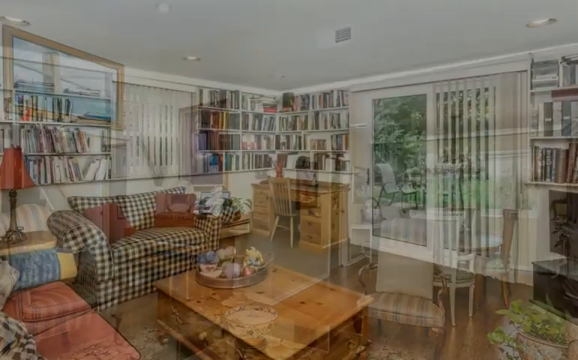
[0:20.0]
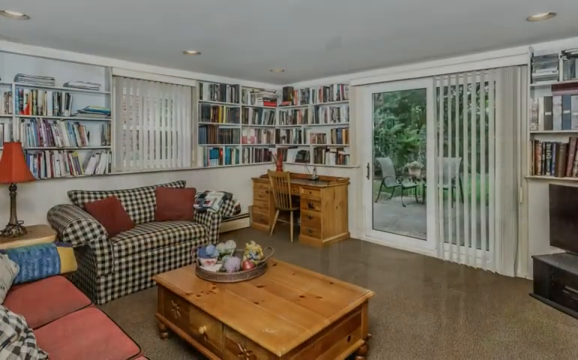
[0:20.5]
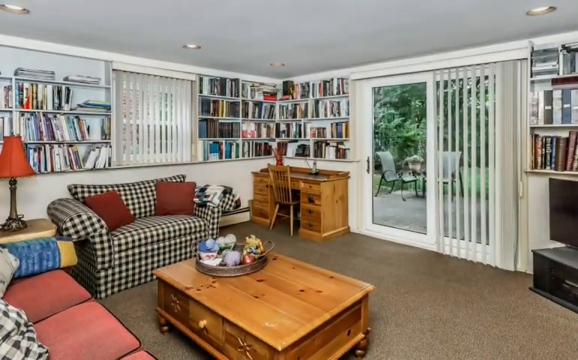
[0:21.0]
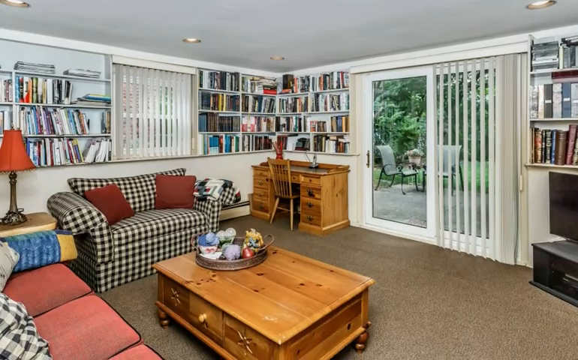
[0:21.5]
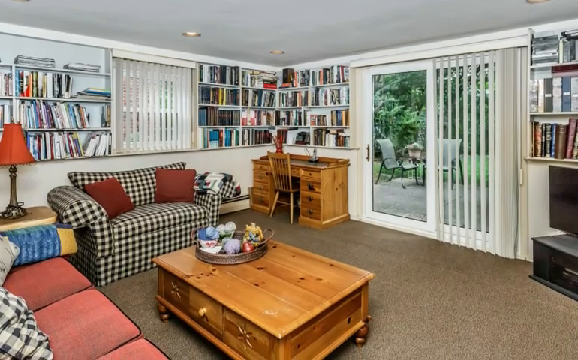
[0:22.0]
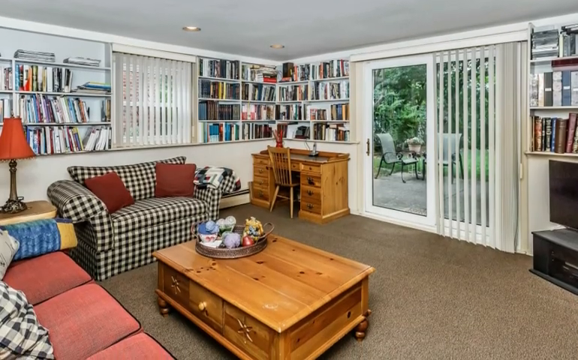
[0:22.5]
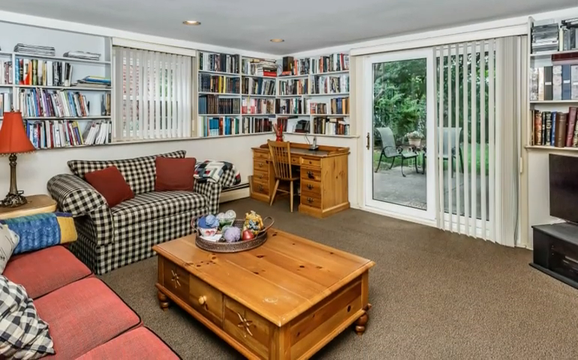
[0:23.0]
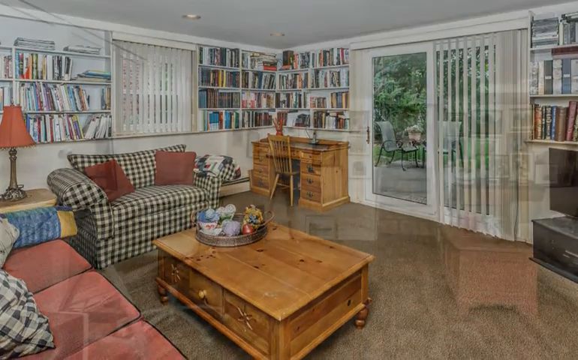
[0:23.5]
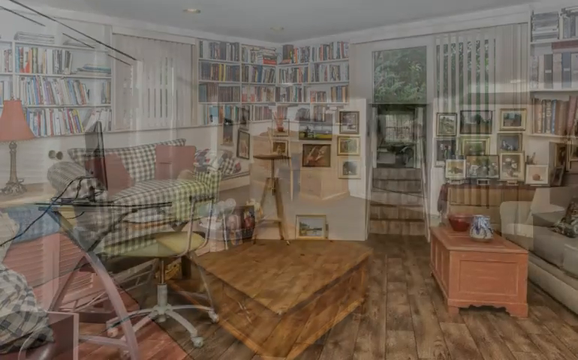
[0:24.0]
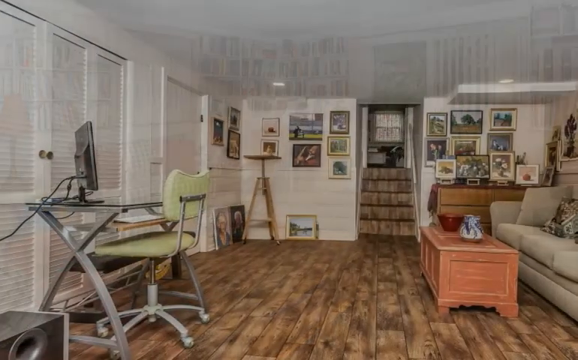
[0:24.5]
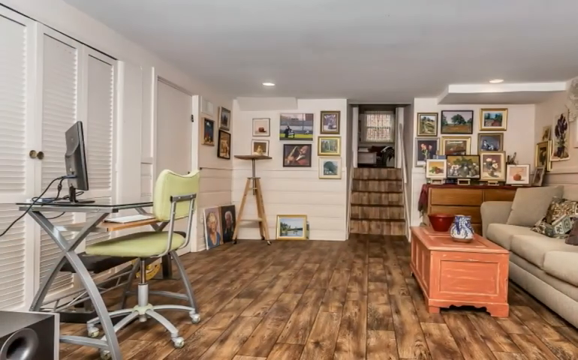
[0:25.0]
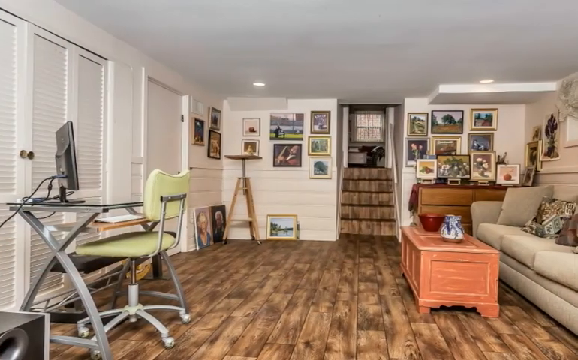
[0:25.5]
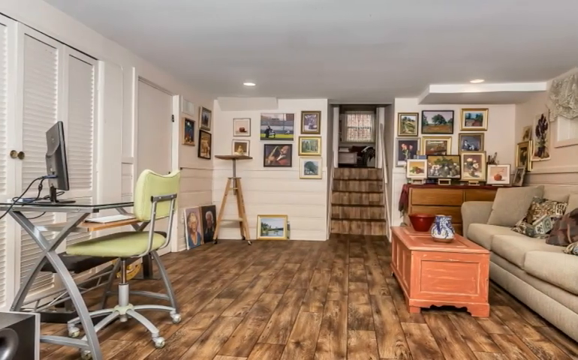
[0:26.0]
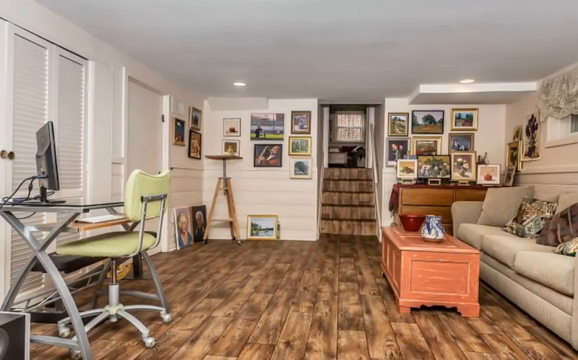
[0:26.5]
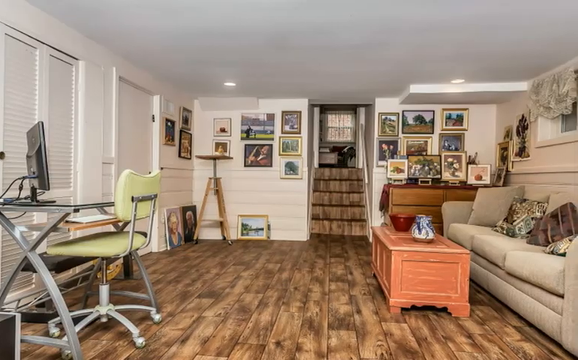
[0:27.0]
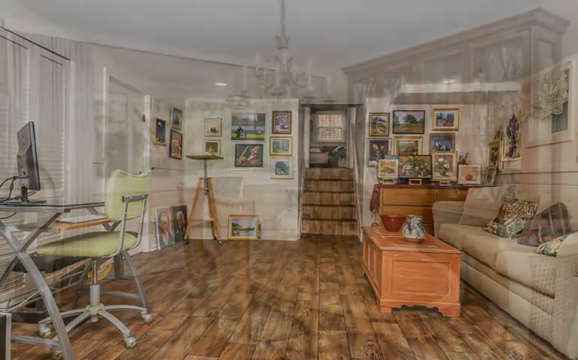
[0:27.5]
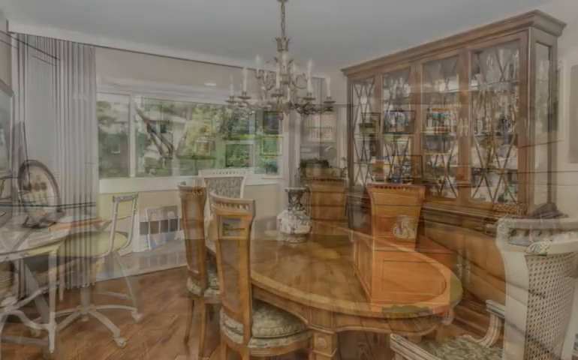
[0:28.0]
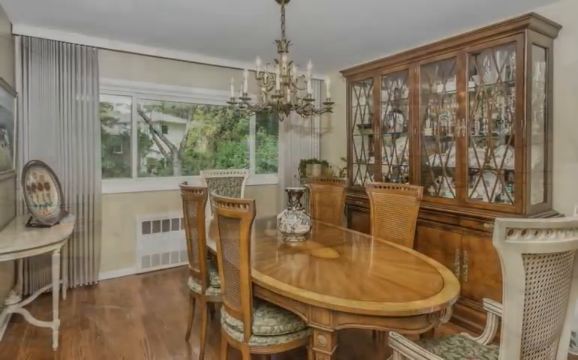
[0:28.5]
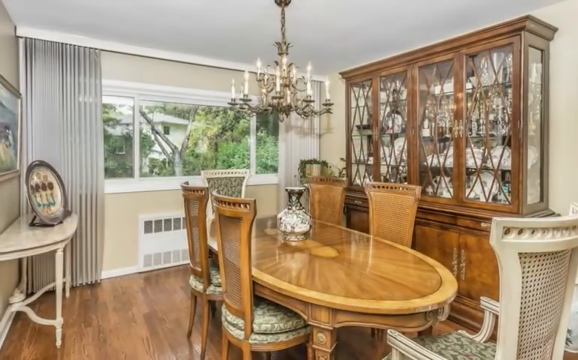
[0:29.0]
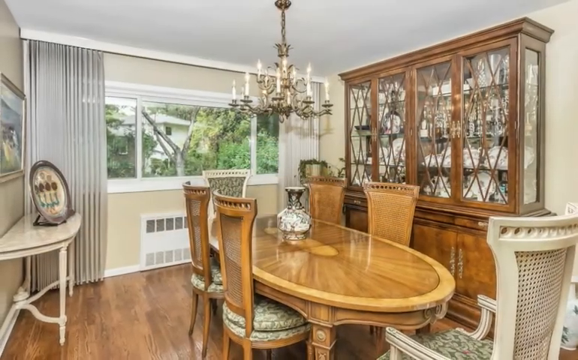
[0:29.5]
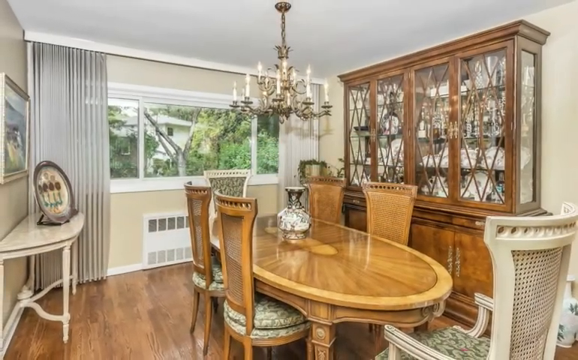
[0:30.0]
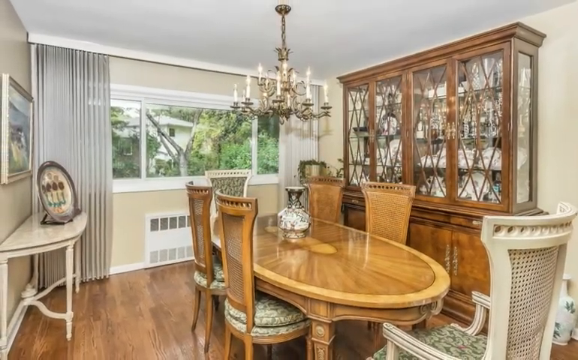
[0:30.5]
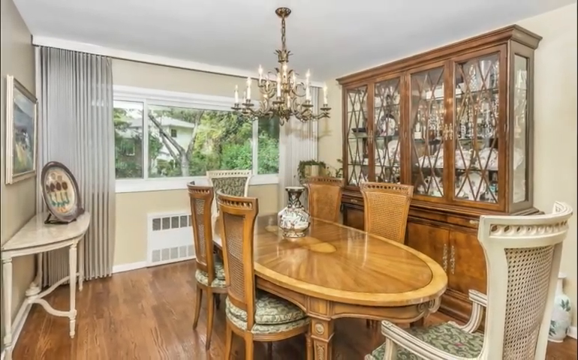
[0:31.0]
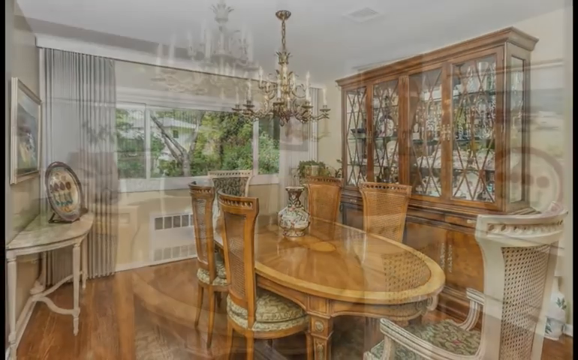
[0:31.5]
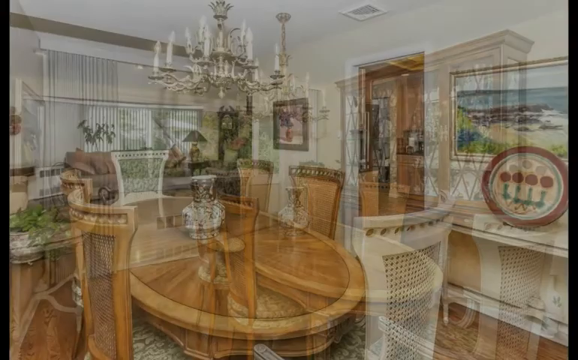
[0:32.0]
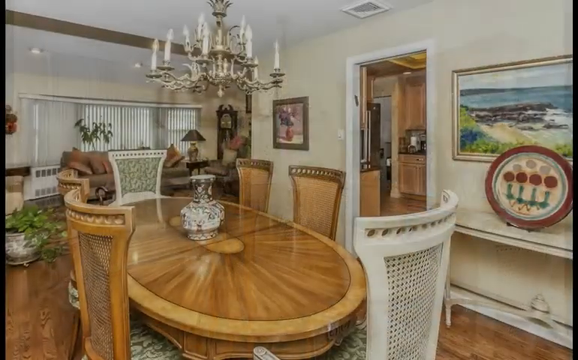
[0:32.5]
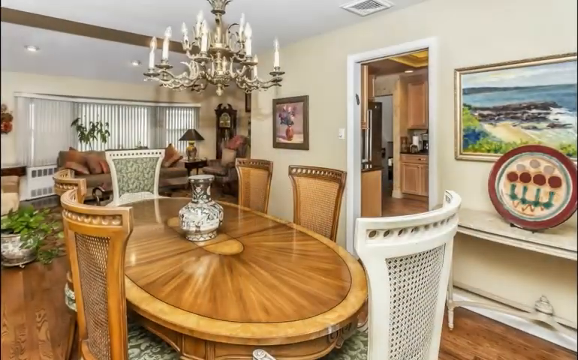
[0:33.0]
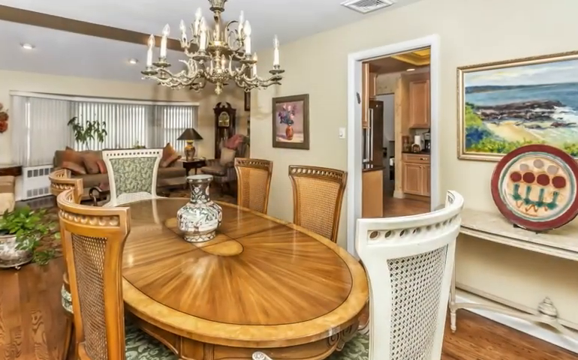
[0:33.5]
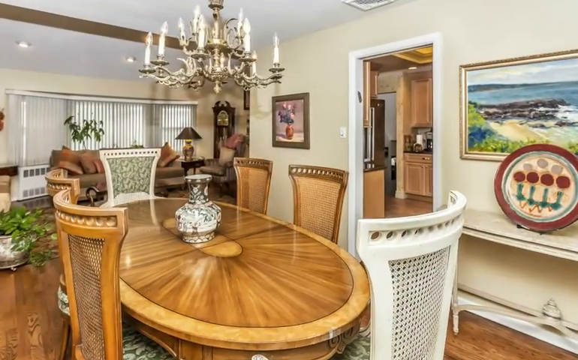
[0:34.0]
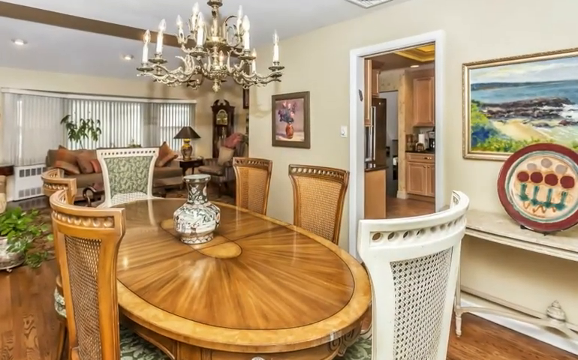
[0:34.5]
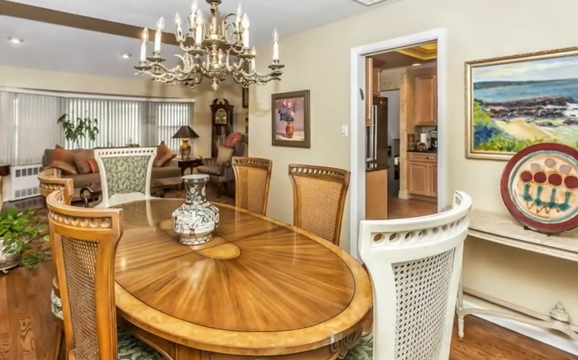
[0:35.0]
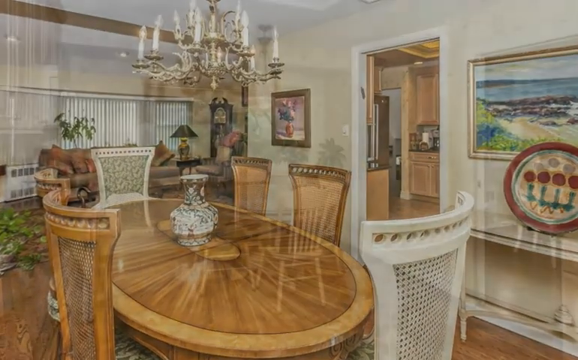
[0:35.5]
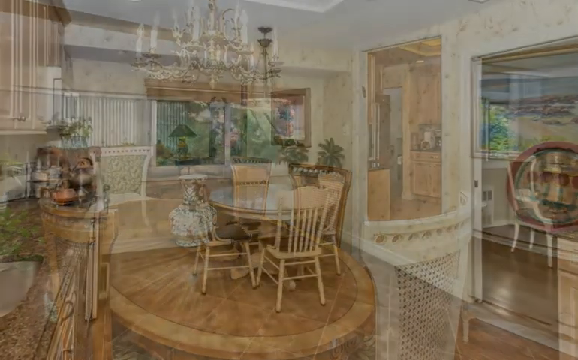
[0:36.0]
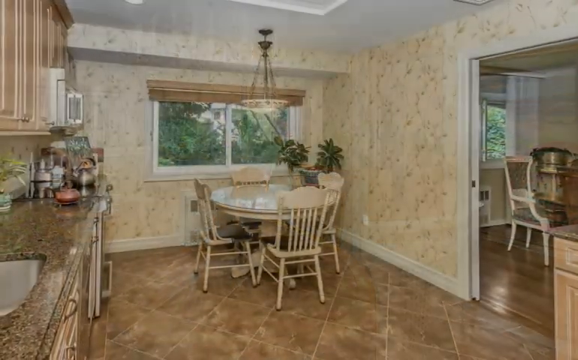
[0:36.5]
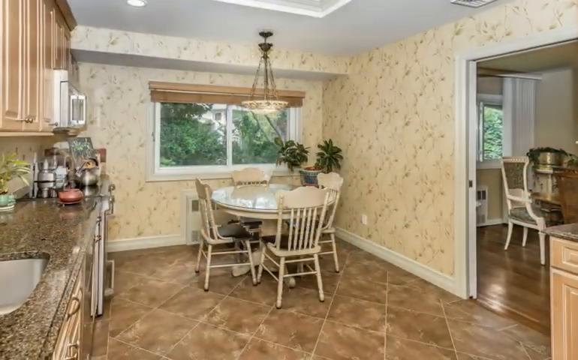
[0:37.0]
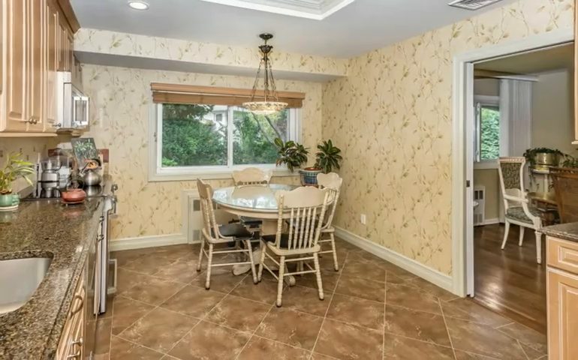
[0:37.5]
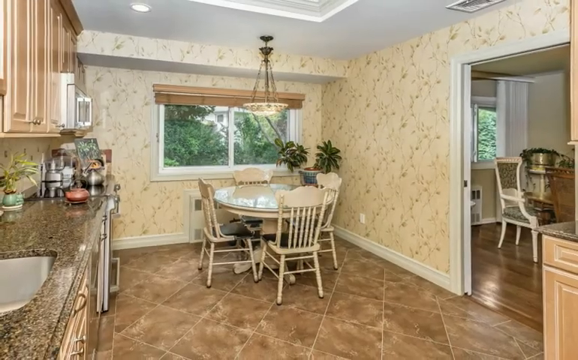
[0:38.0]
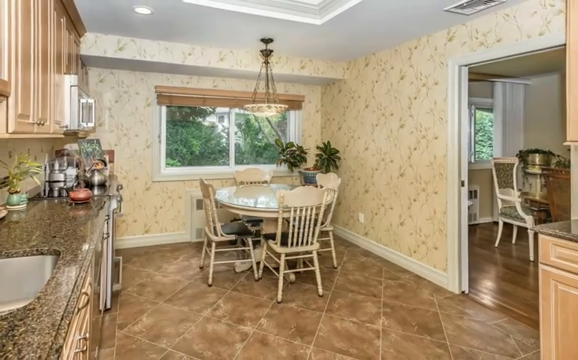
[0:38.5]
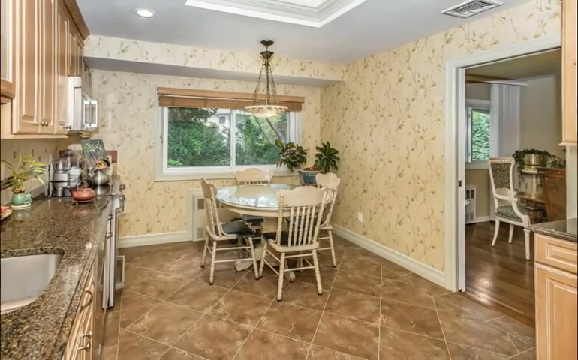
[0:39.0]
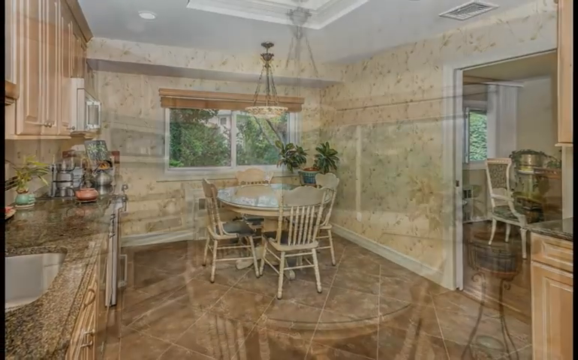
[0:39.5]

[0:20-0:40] Inside the home, a room that appears to be the family room, great room, or den has white walls. A checkered brown and off-white love seat is on the wall on the left side of the room, with two rust-colored accent pillows on it. There is also a rust-colored sofa with three seat cushions and three back cushions. Sliding doors look out into the backyard. Next, the dining room appears, with a large oval walnut-colored wood table surrounded by six chairs. Two high-backed walnut chairs are on either side of the table, and one chair at each end is white; the white chairs are the same style as the walnut ones.